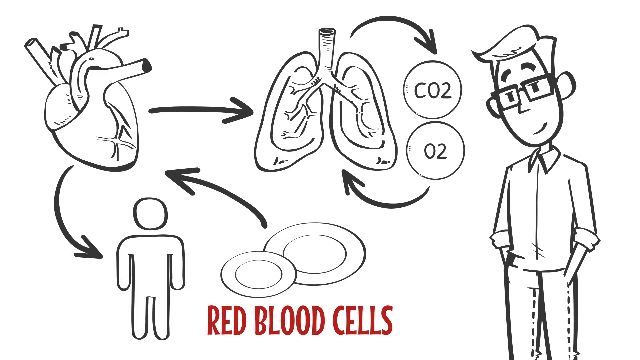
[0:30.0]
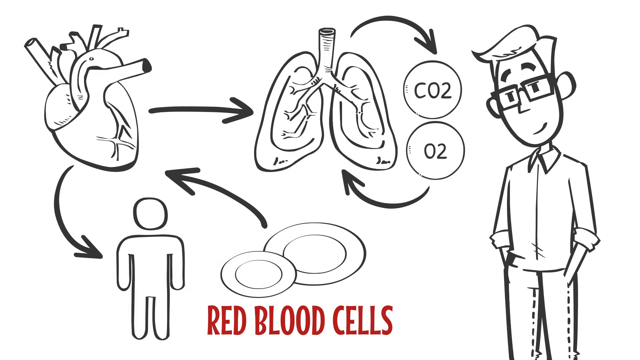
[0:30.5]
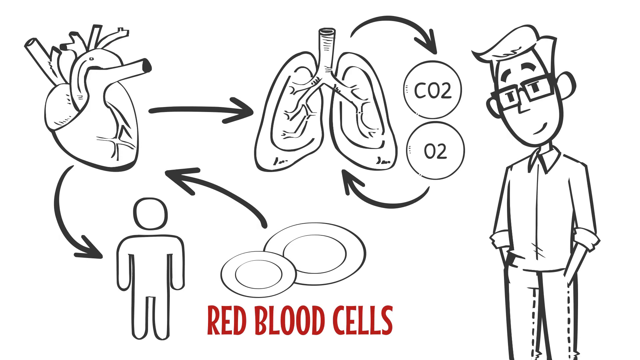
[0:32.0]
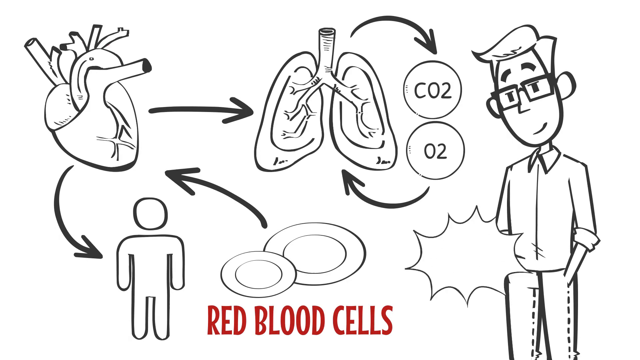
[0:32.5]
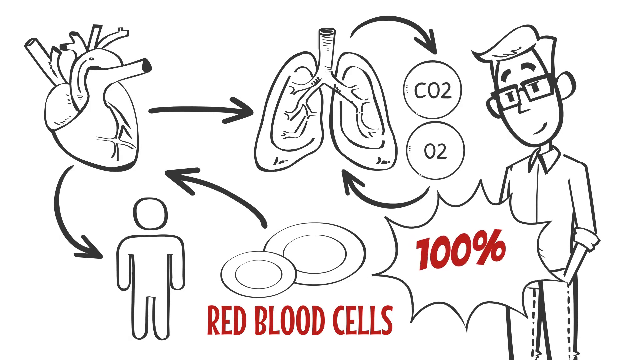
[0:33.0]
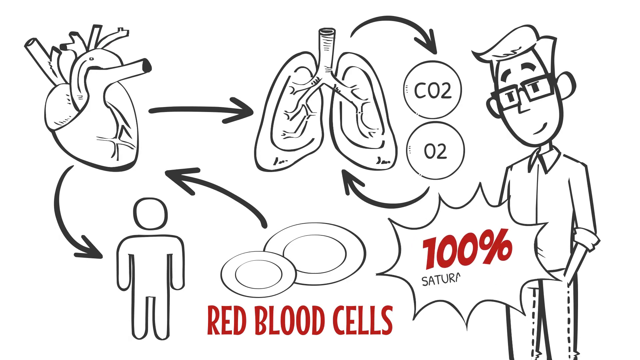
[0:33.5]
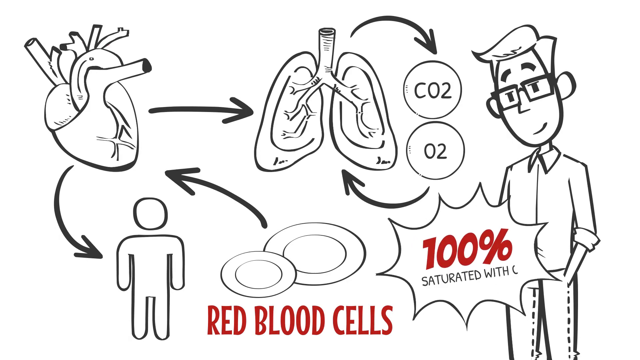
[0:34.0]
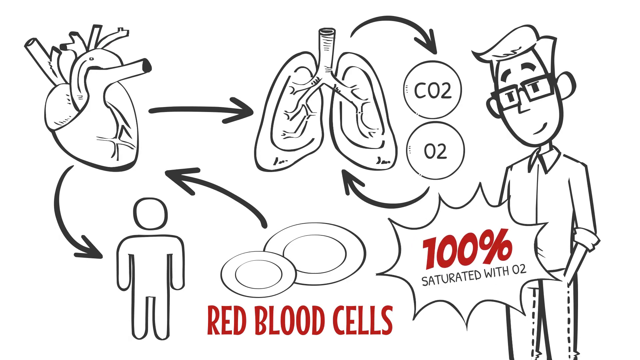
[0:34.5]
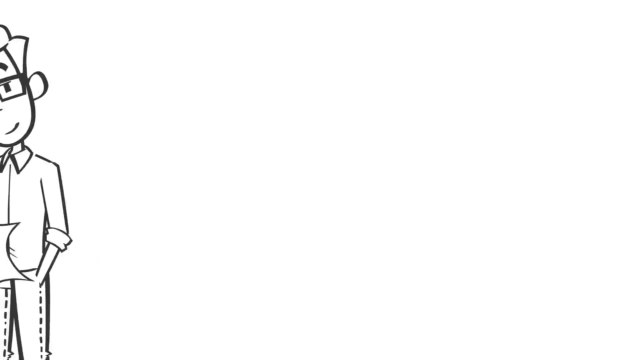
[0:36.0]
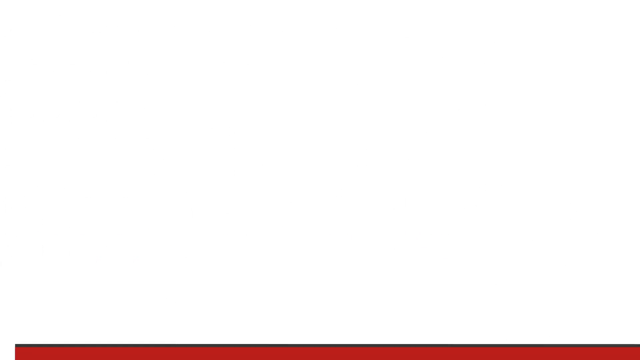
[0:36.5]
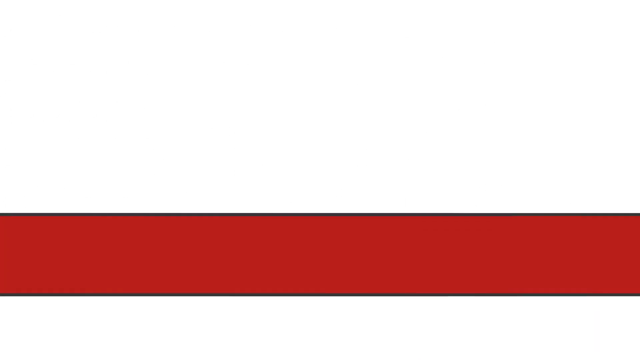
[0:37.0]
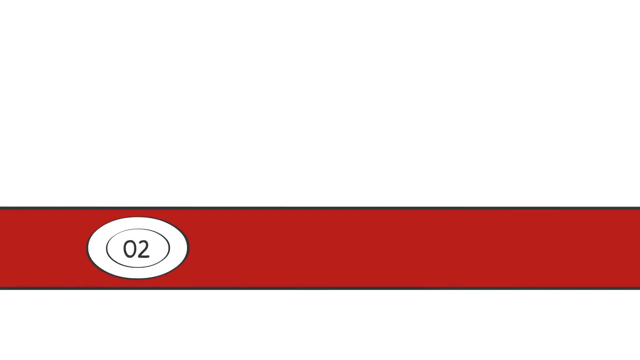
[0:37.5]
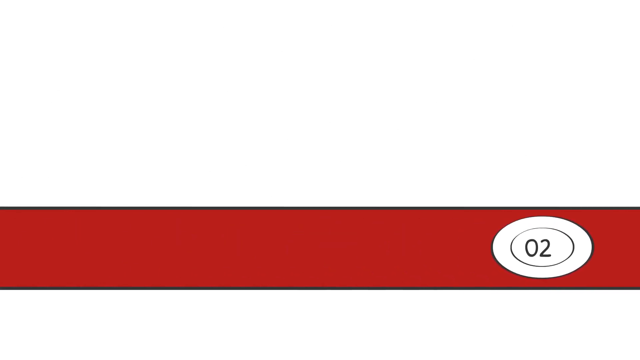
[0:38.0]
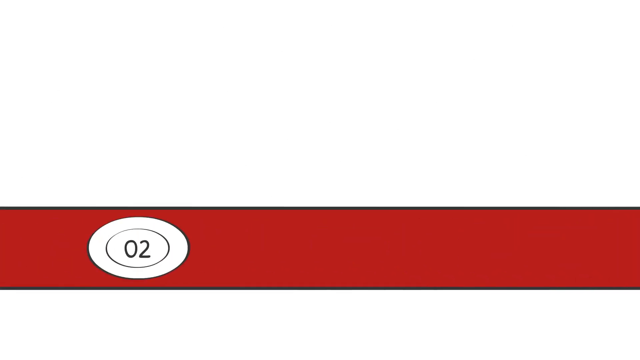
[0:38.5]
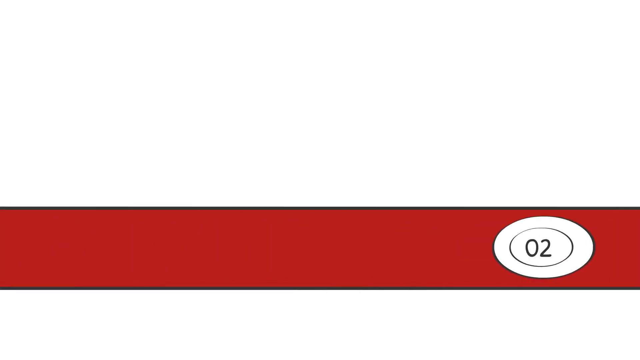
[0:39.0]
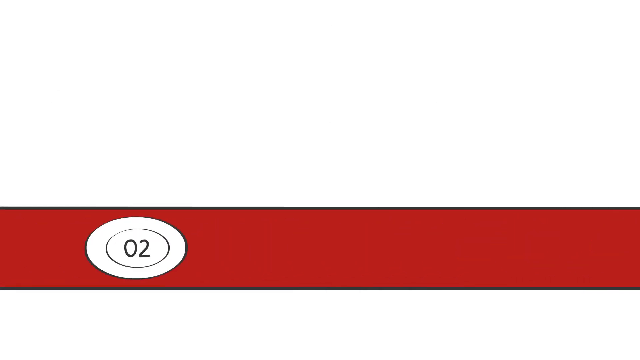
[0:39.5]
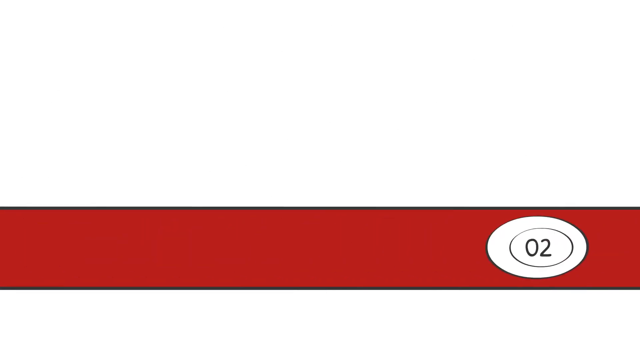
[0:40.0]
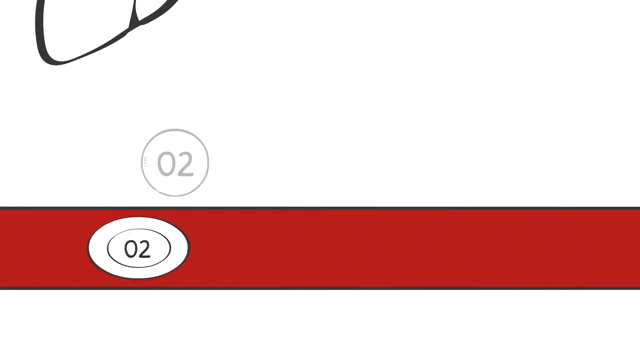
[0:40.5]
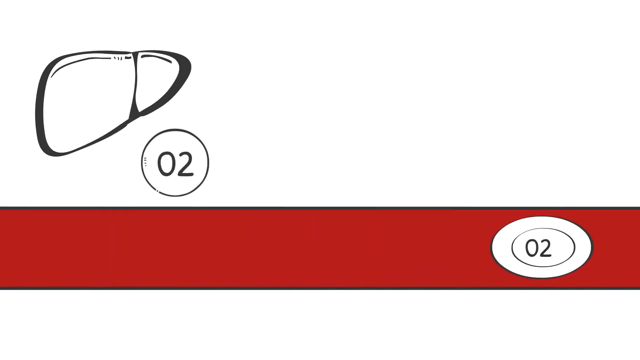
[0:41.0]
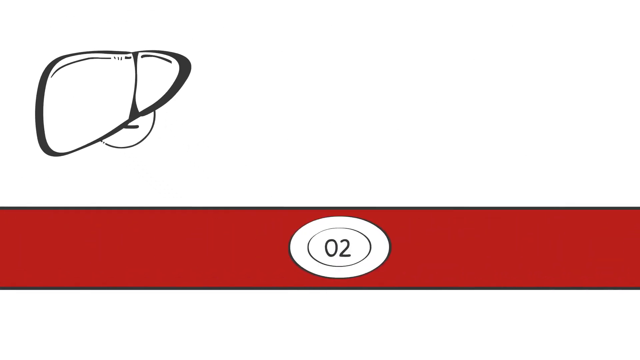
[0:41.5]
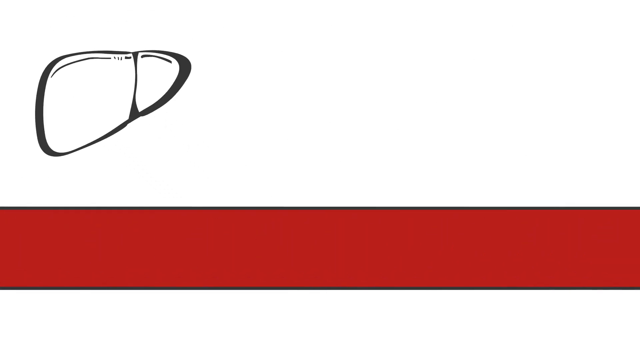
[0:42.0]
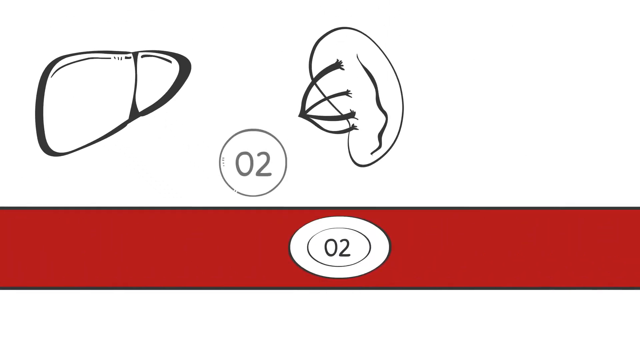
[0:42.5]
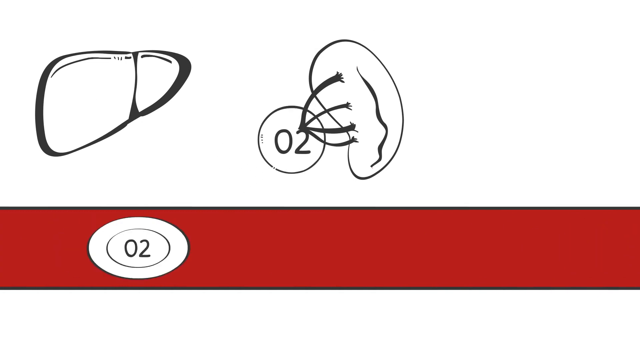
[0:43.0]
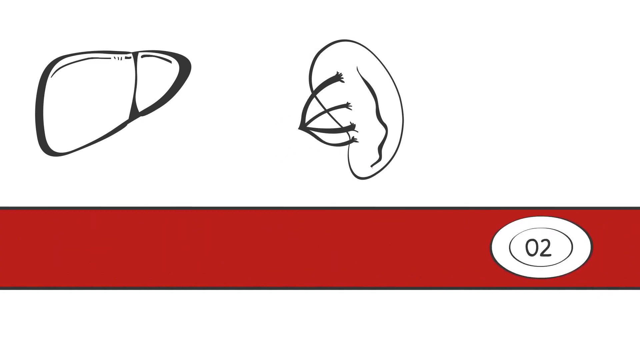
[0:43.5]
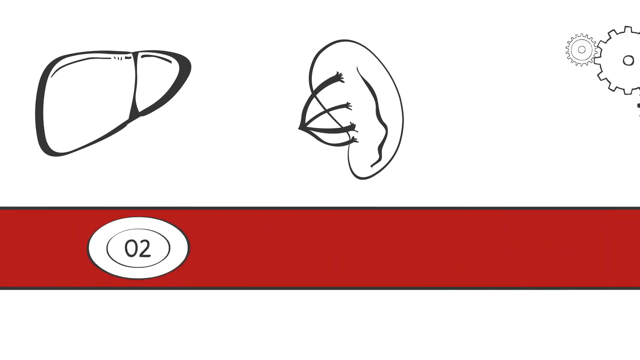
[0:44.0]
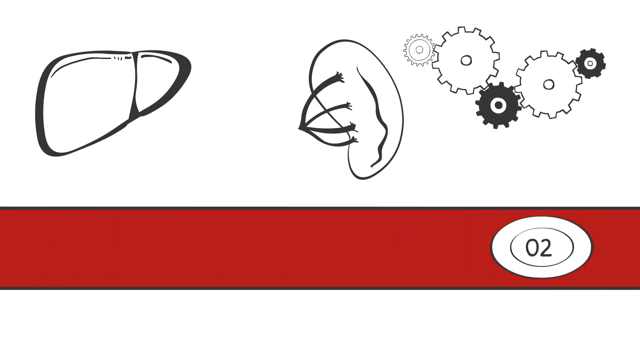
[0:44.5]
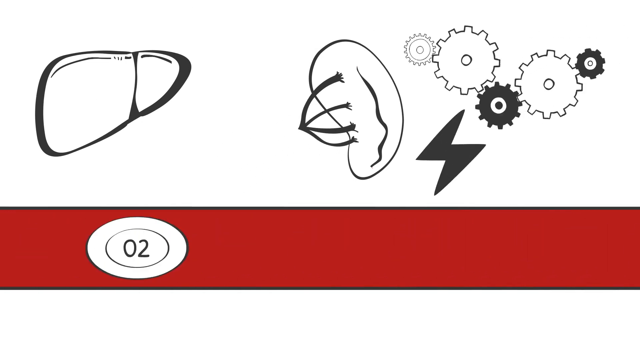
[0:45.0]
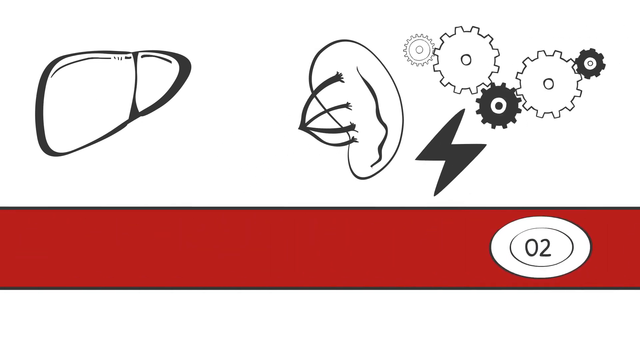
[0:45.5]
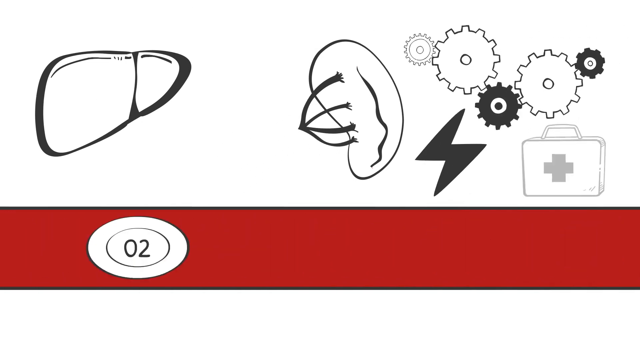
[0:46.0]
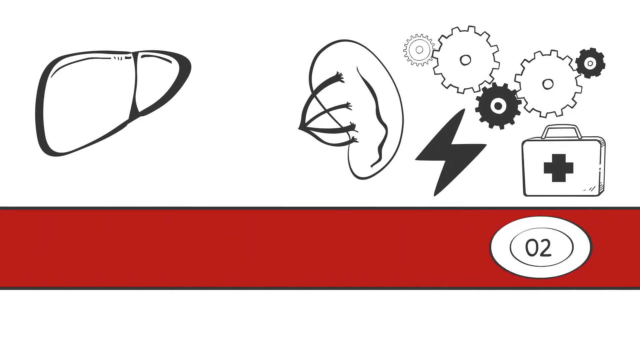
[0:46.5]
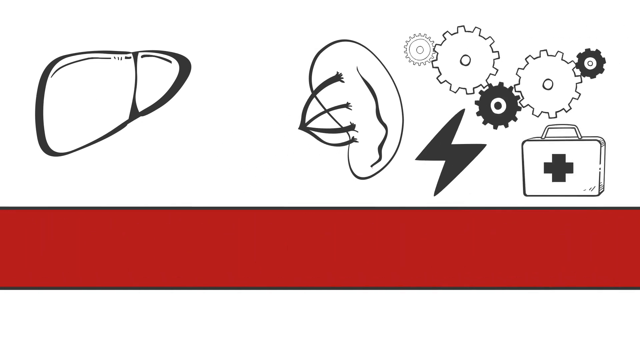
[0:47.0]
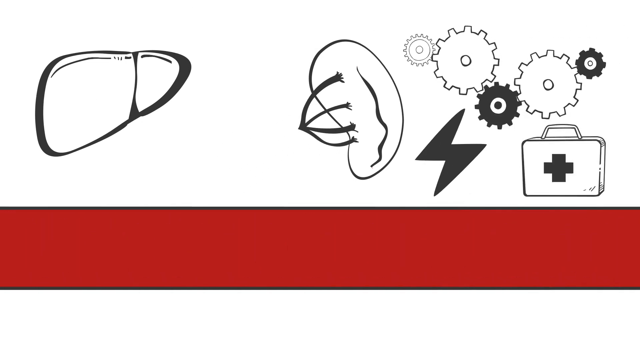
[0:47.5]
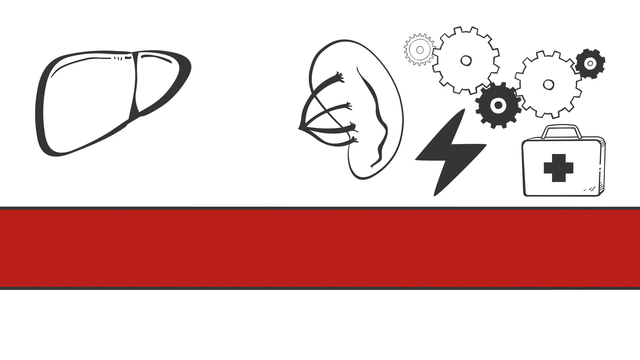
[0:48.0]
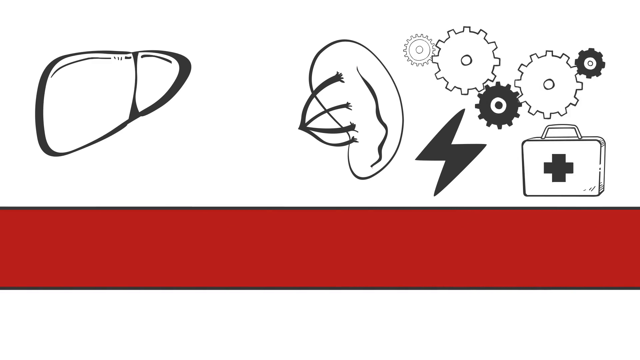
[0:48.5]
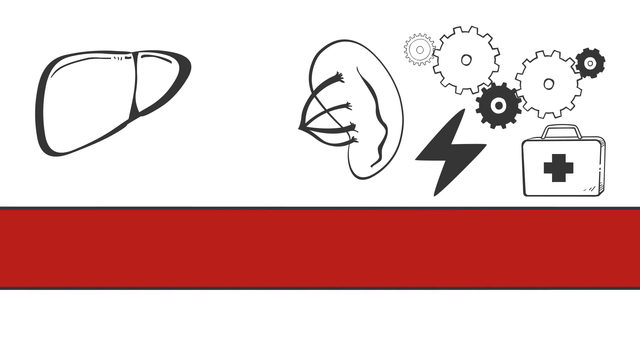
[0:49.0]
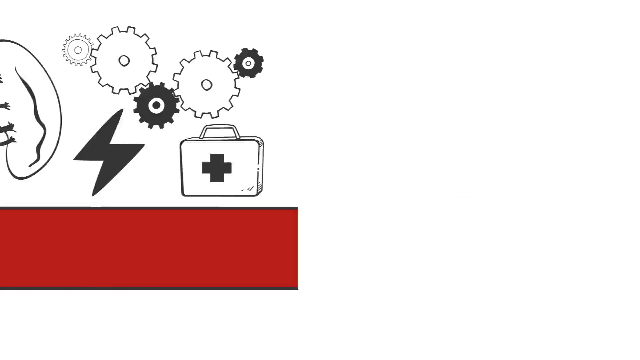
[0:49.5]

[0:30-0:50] All the arrows are drawn on the diagram, which shows 100% saturated with O2. The next screen shows oxygen traveling against a red background, apparently representing the bloodstream. Images pop up at the top: O2 being absorbed, then electricity, then grinding gears, and then a first aid kit box.